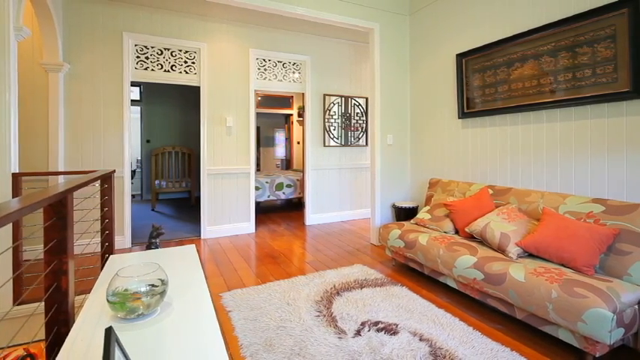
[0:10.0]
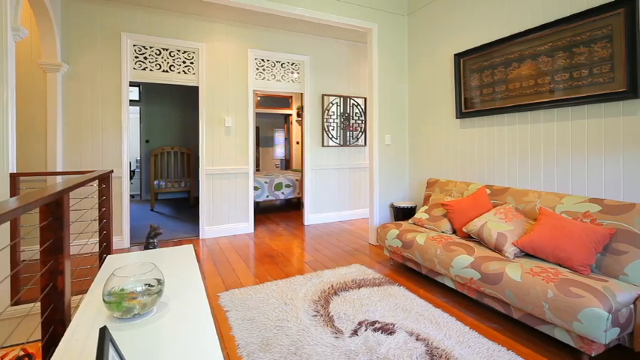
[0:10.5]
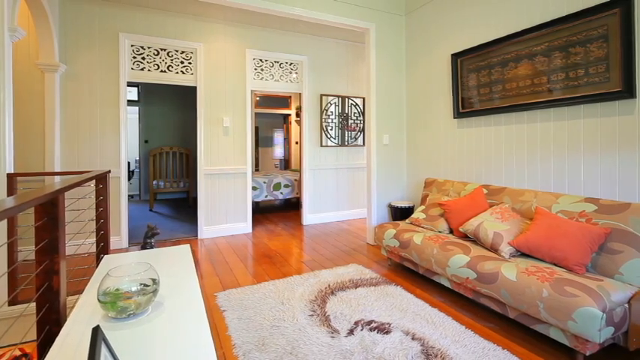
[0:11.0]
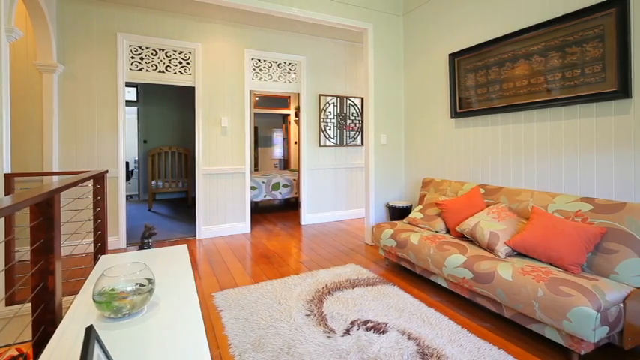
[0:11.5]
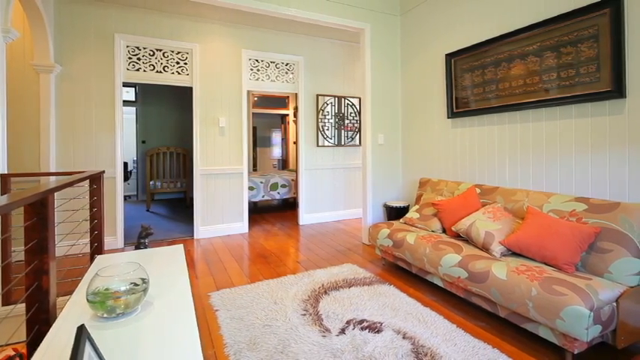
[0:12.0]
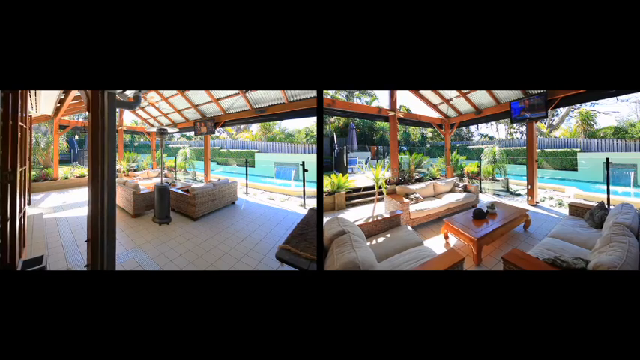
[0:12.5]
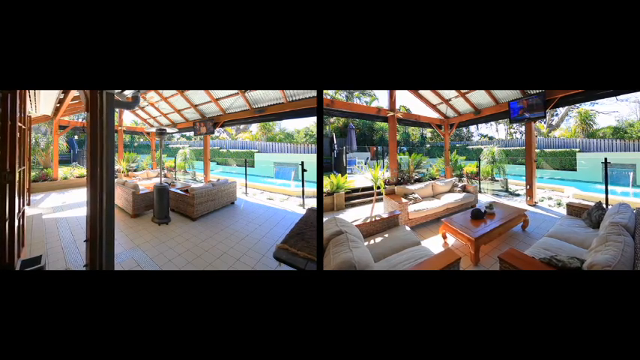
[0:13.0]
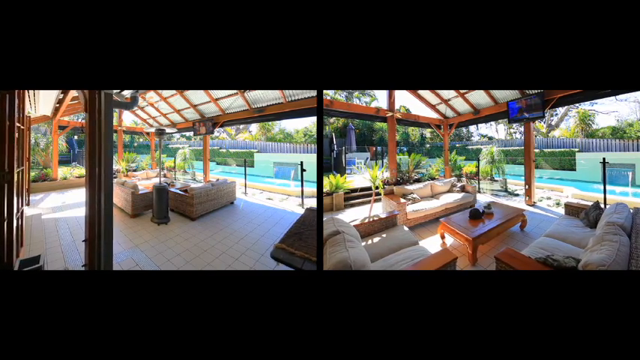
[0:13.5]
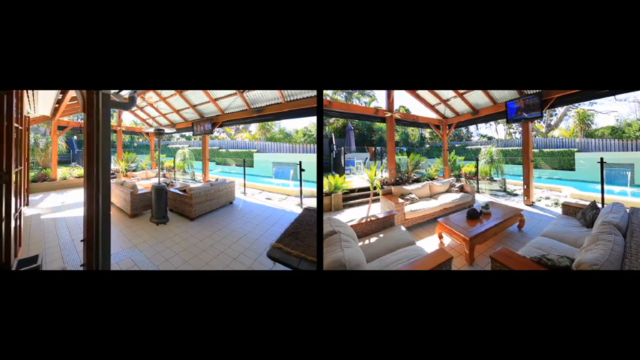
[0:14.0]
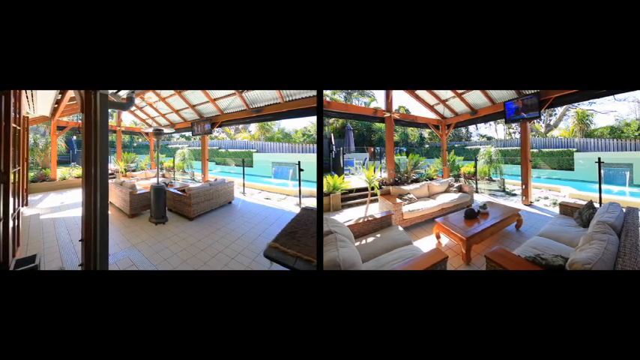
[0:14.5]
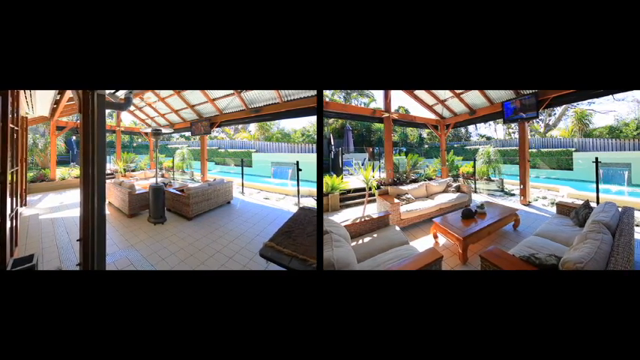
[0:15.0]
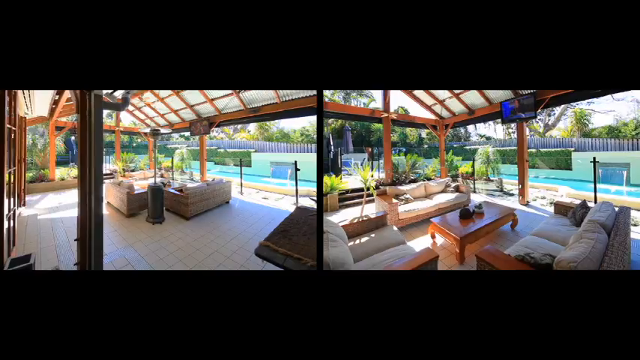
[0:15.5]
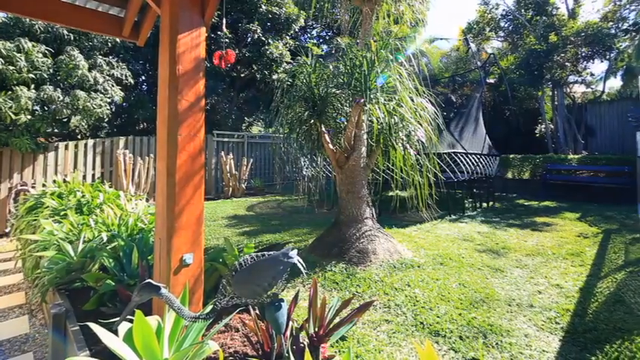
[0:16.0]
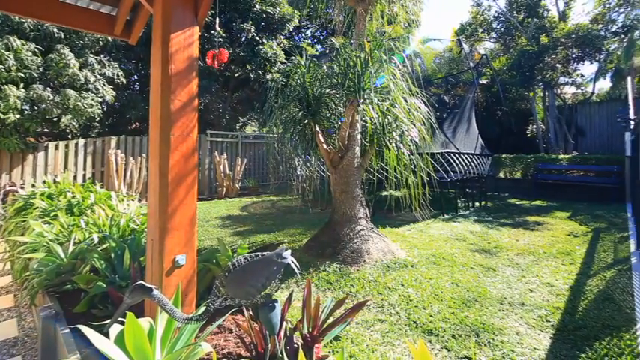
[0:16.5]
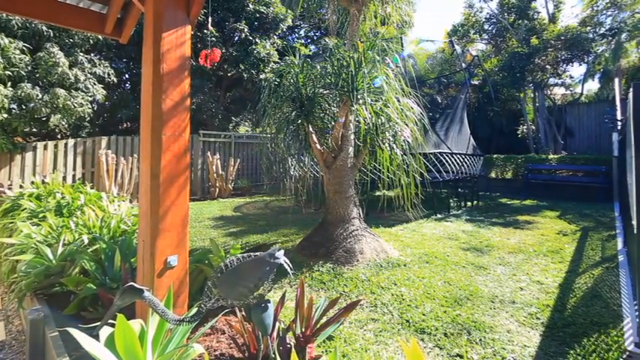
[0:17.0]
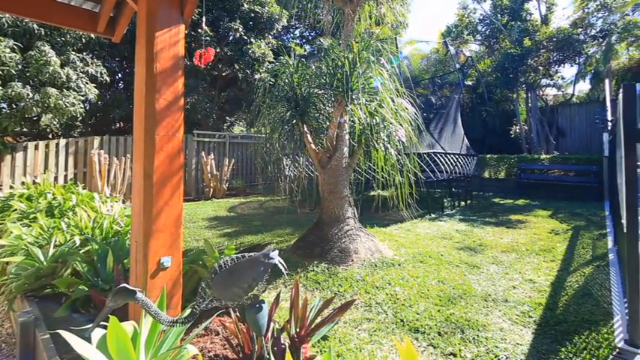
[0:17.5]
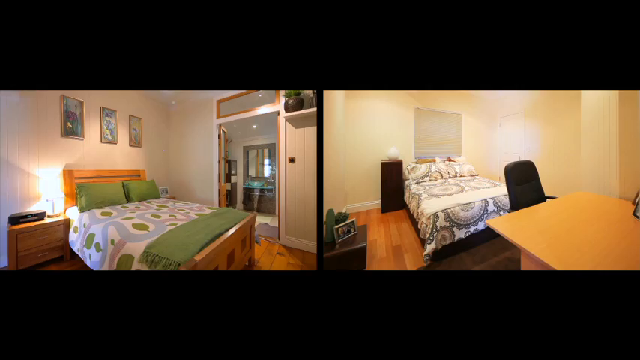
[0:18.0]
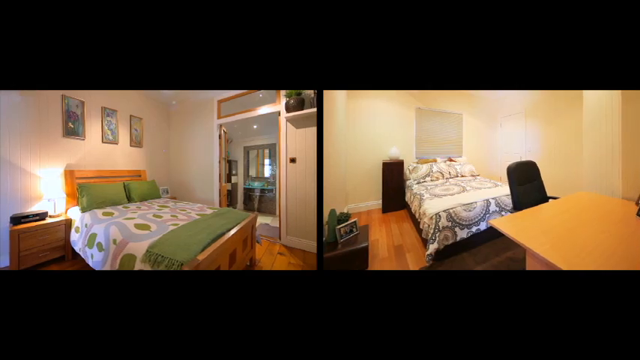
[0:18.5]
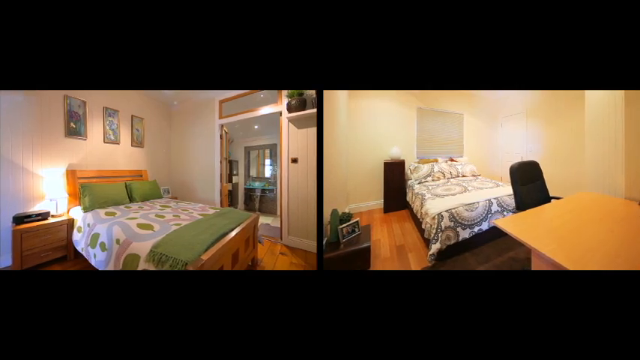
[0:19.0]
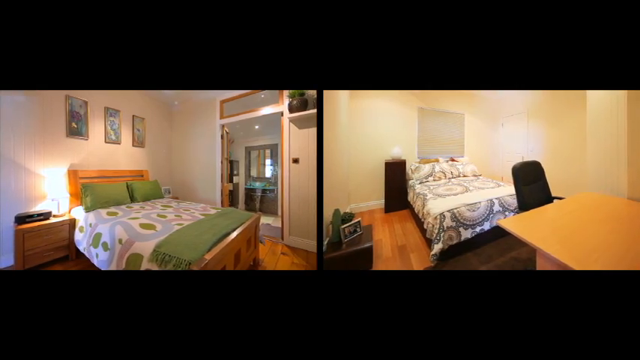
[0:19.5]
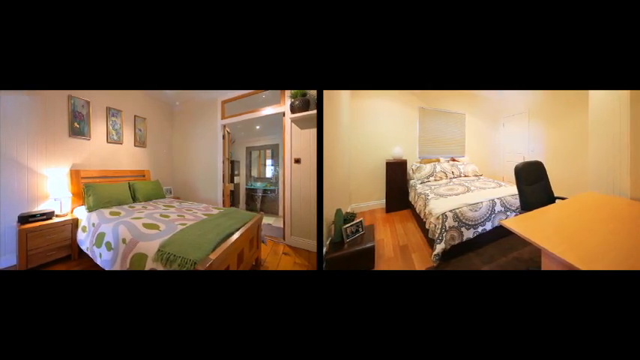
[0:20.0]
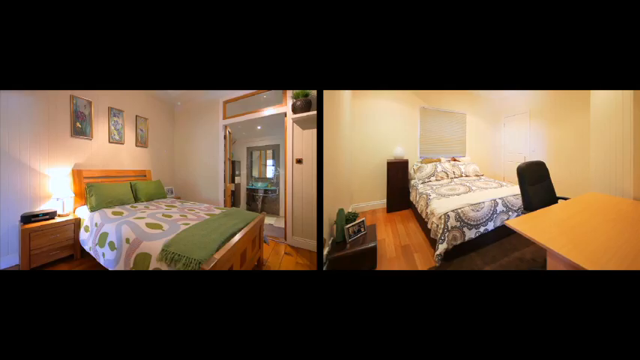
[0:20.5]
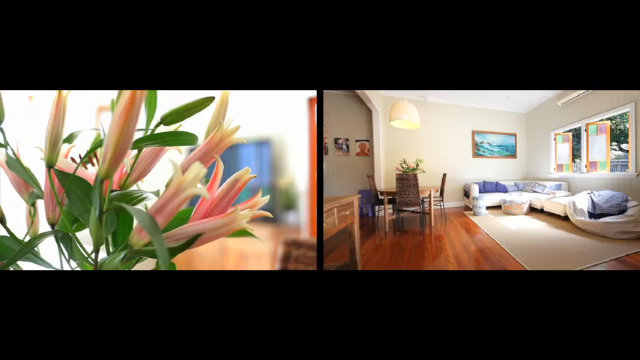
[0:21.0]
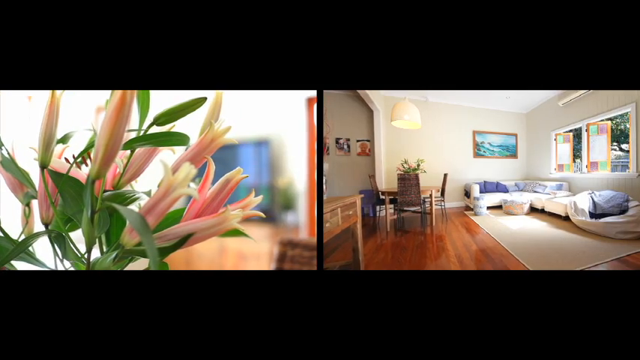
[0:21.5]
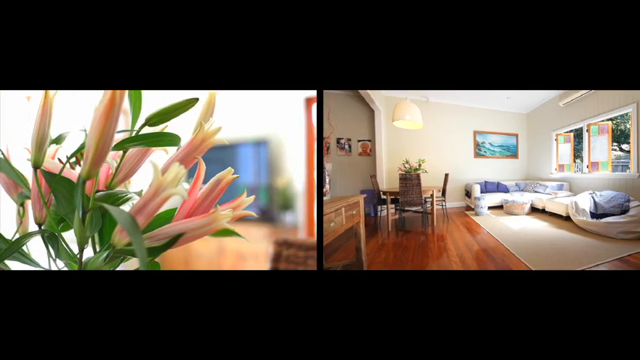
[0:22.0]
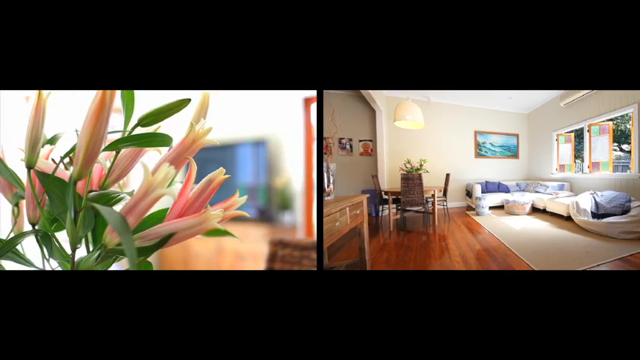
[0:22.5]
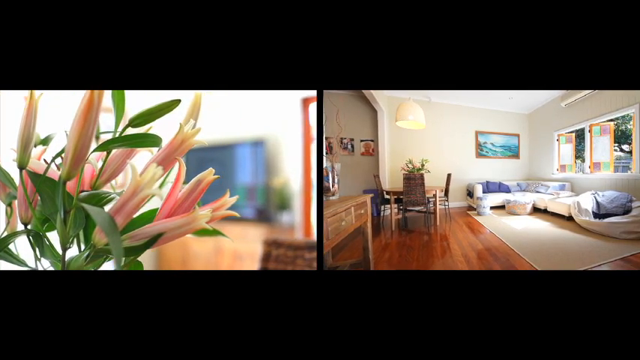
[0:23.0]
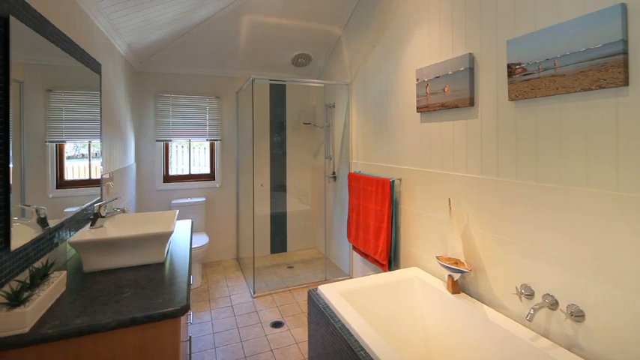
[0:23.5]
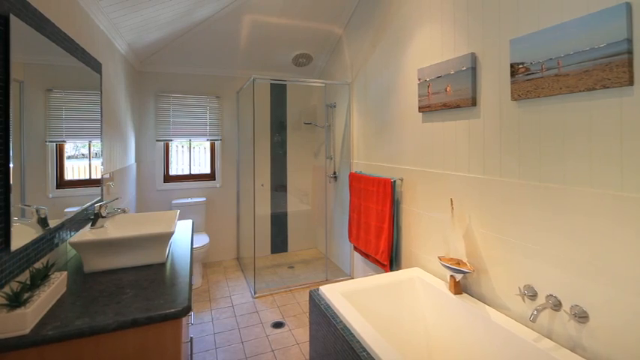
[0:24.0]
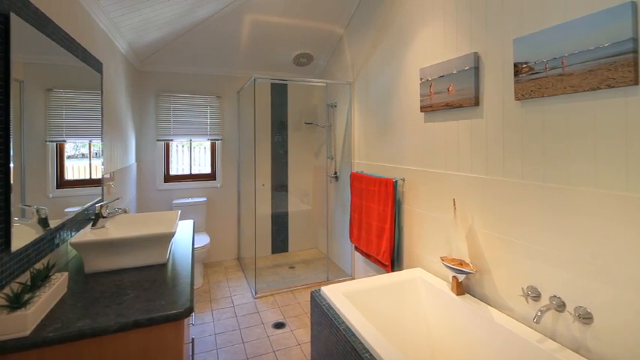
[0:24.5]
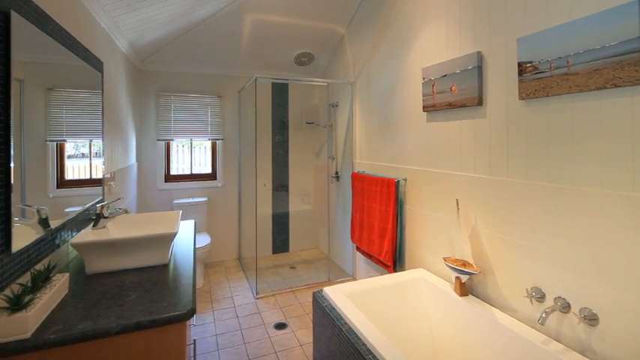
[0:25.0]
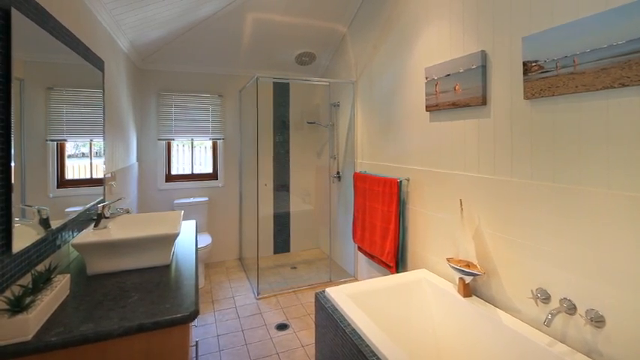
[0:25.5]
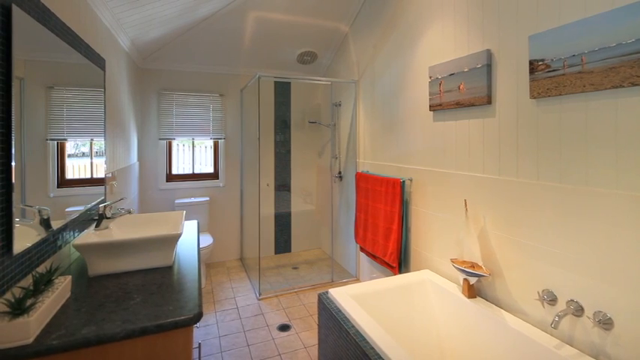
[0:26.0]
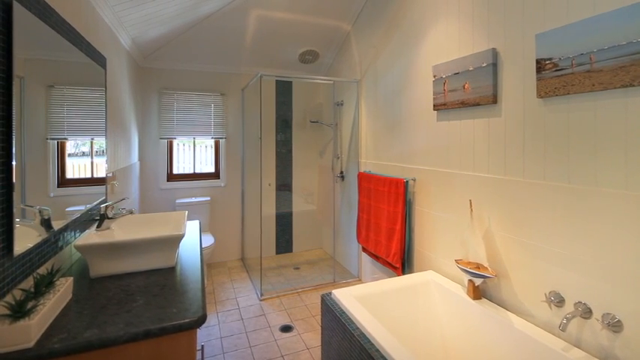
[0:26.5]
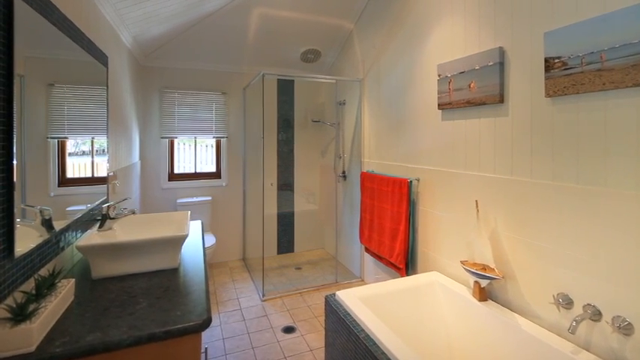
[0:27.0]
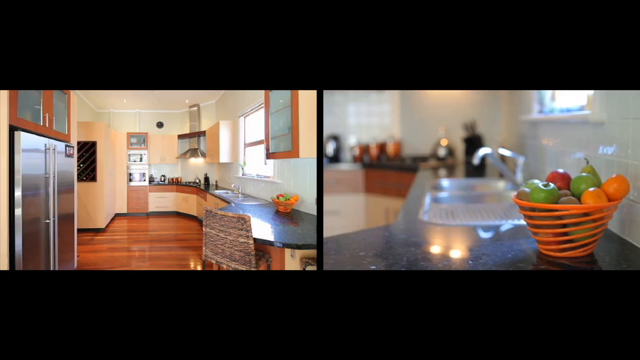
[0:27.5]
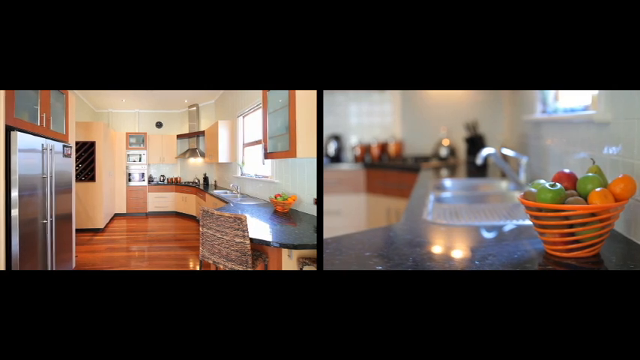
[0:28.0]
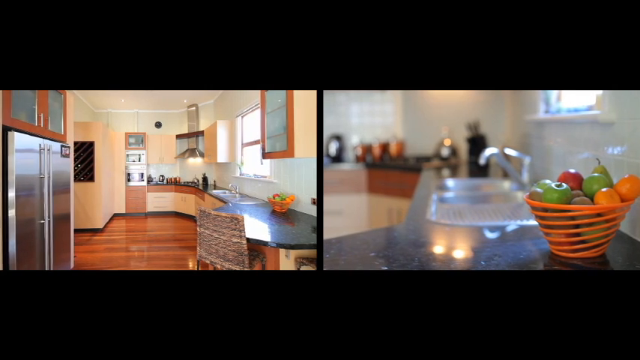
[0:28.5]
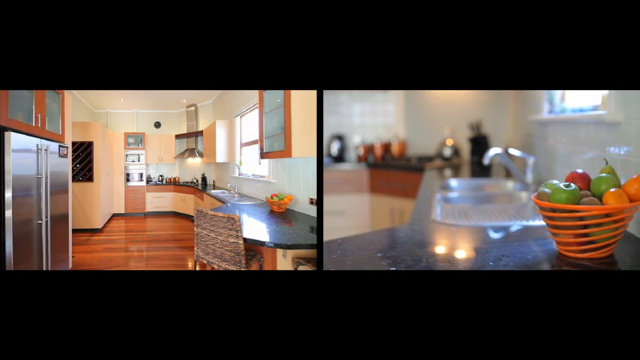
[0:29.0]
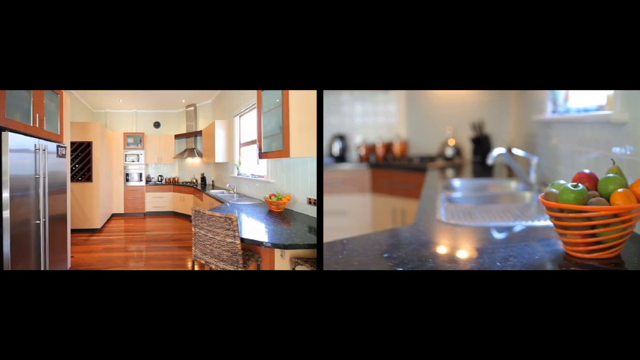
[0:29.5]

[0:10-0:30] A yard is briefly shown, though it is unclear whether it is the back or front; there is grass and a couple of large trees. More of the interior of the home follows, with the living room appearing again briefly. Outdoors, a patio area with its furniture set up is shown in a split screen of two parts of the same patio, and there appears to be an outdoor TV on the patio. A split screen shows two different bedrooms. An area that looks like a den has white couches and some decorations. A bathroom appears briefly, then another split screen shows different parts of the kitchen. At one point there appear to be some flowers, and a split screen to another bedroom. The bathroom has a sink, a few towels hanging, and a tub. Everything in the pictures is very bright and colorful. The kitchen is long, with counter space that kind of curves in a semicircle and a refrigerator at the end of it. A fruit bowl and the kitchen sink are visible. The other parts of the house are shown very briefly.